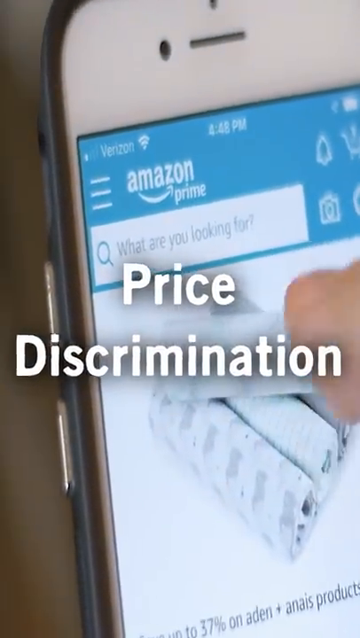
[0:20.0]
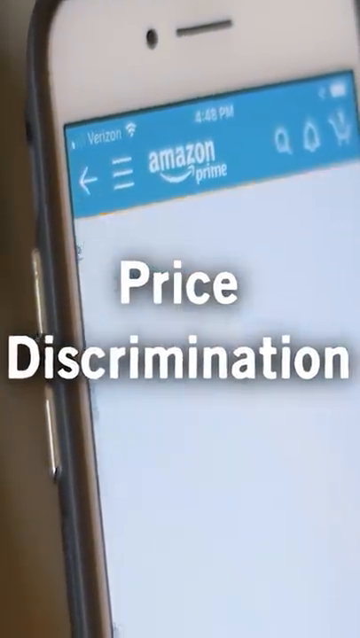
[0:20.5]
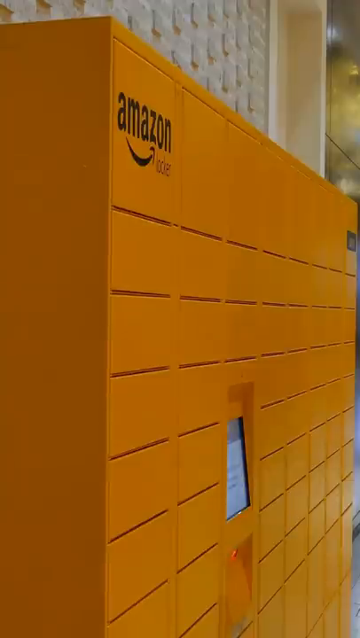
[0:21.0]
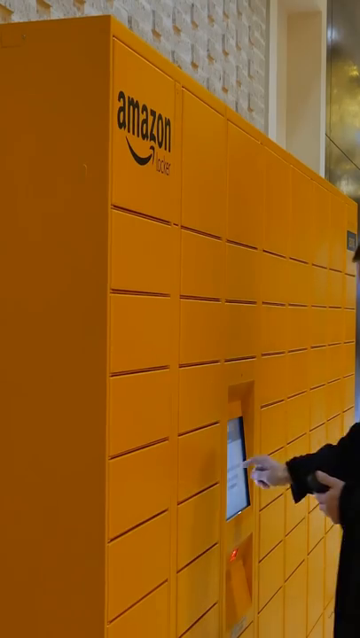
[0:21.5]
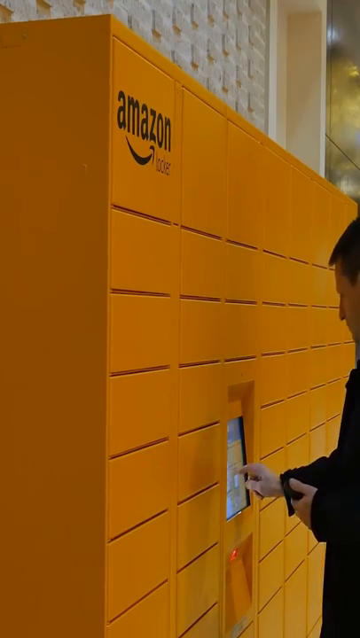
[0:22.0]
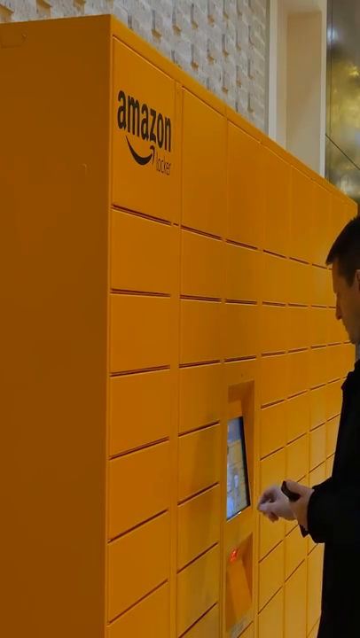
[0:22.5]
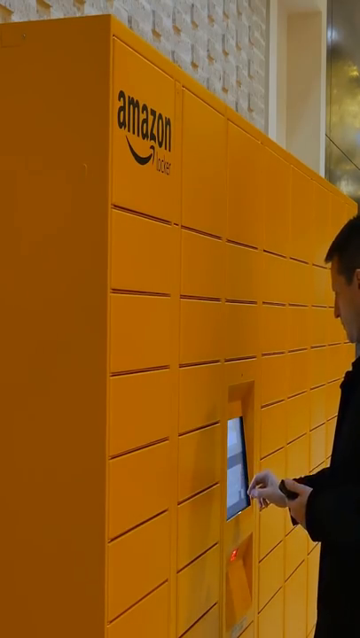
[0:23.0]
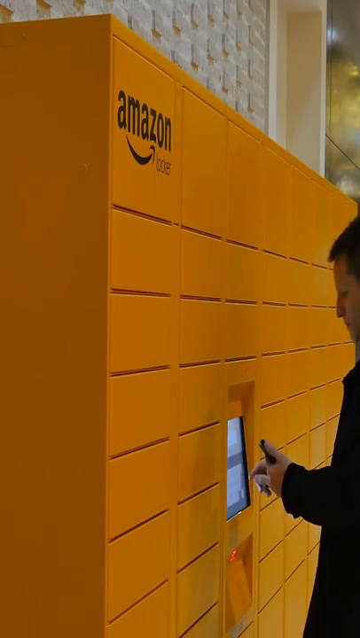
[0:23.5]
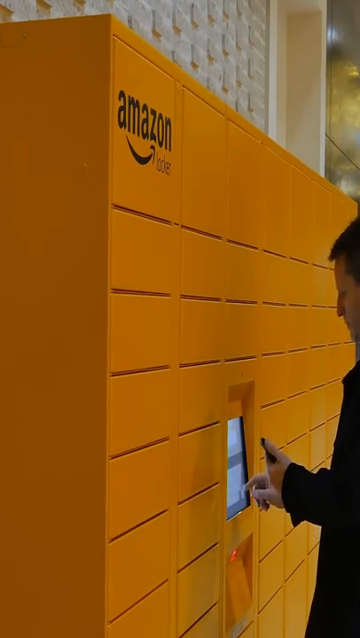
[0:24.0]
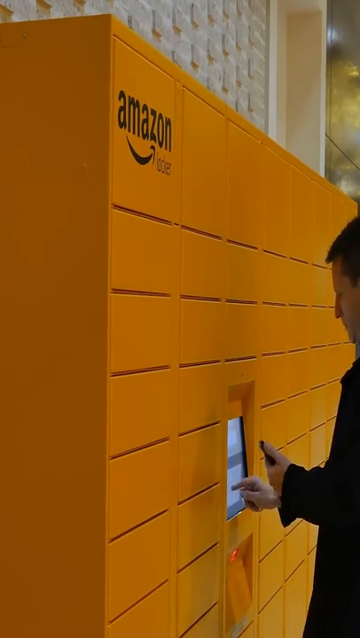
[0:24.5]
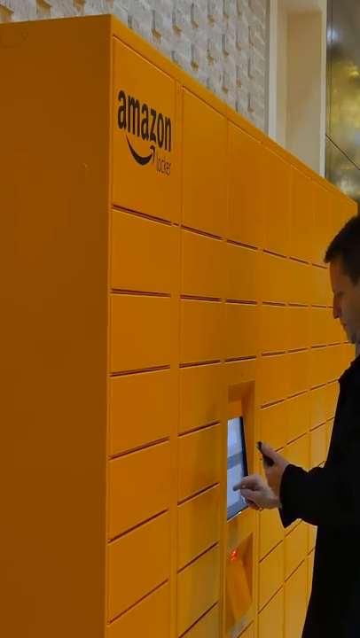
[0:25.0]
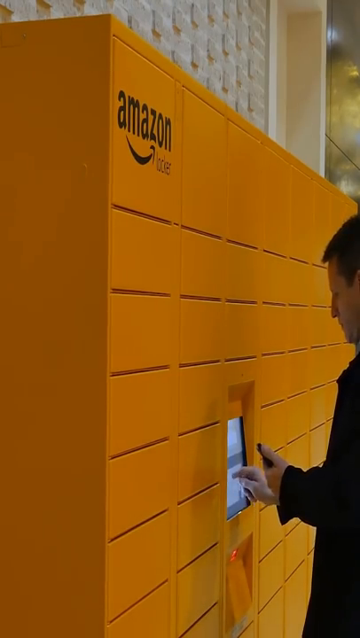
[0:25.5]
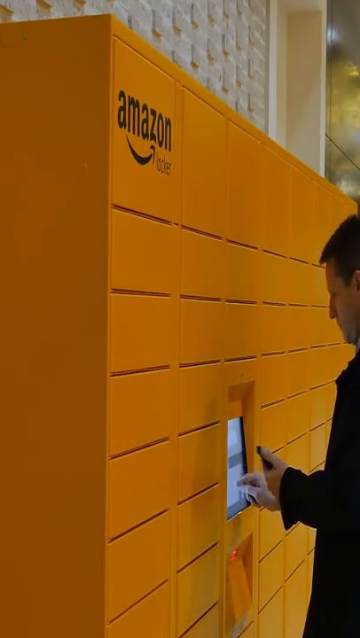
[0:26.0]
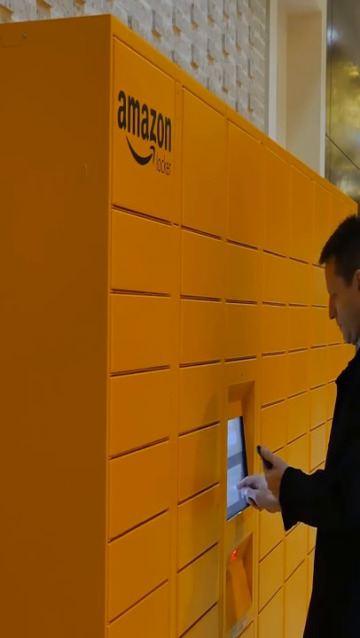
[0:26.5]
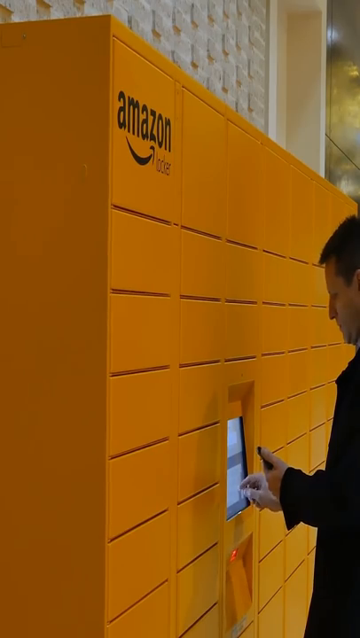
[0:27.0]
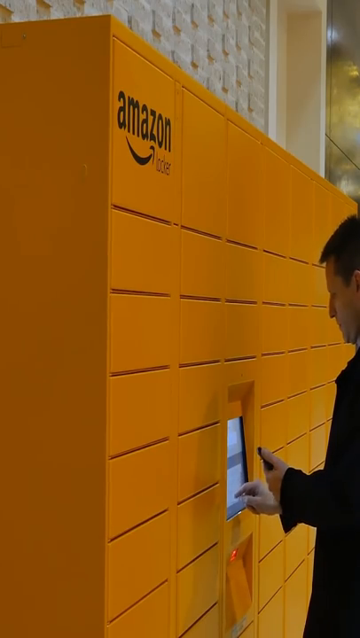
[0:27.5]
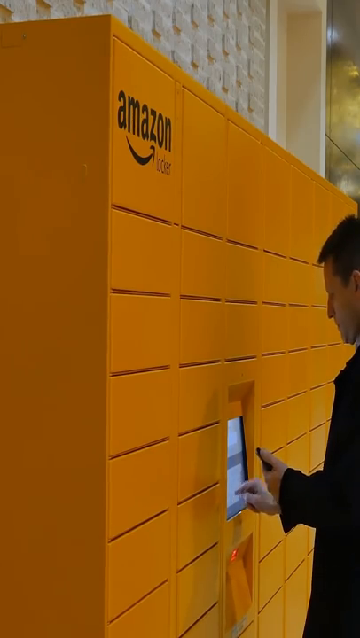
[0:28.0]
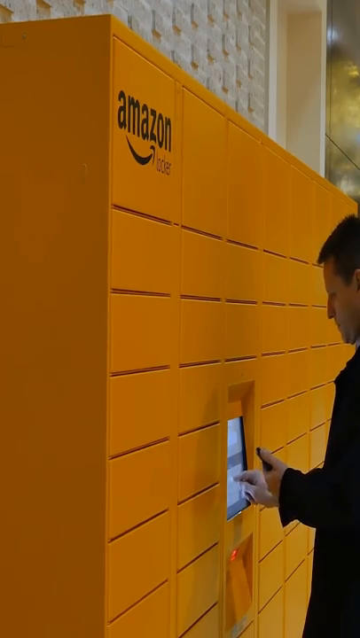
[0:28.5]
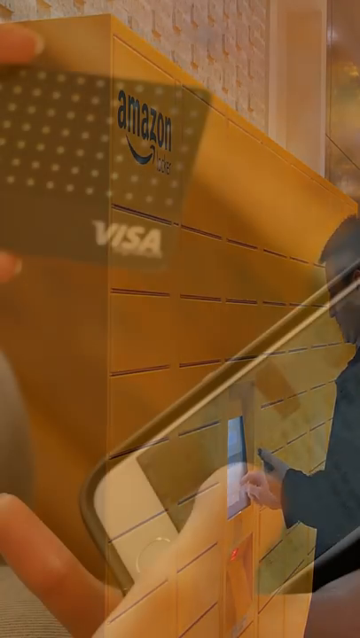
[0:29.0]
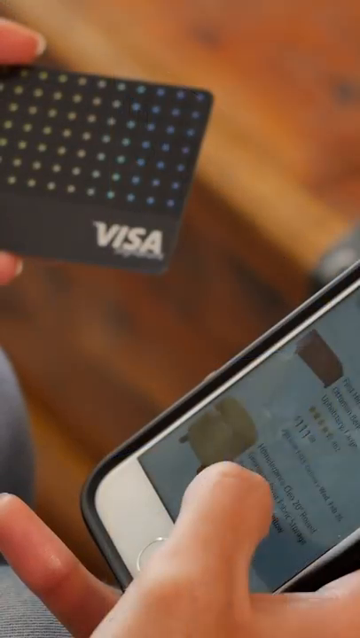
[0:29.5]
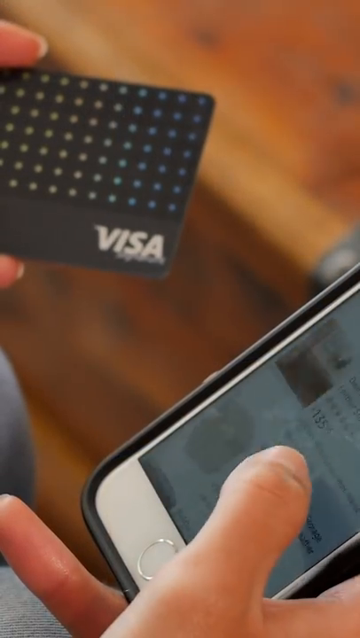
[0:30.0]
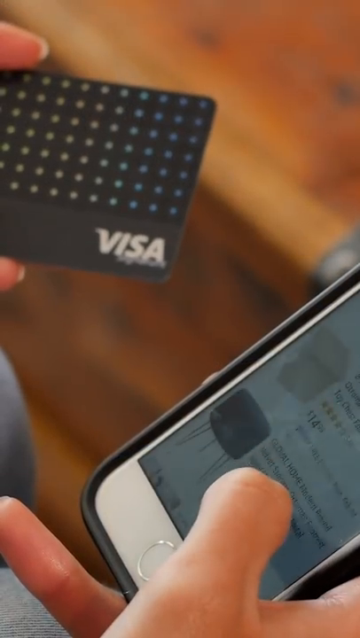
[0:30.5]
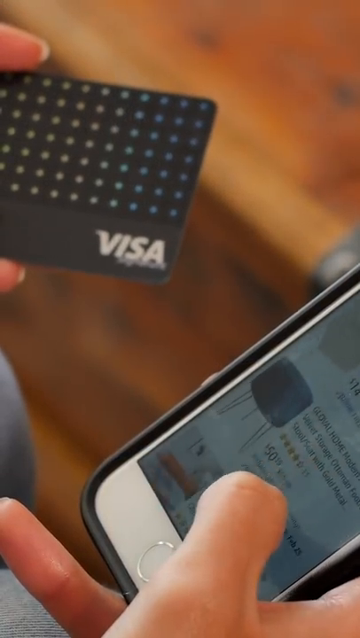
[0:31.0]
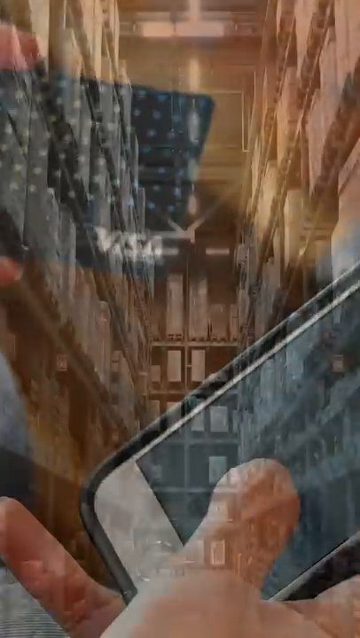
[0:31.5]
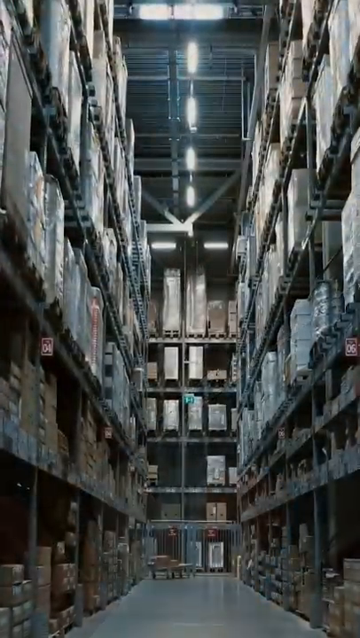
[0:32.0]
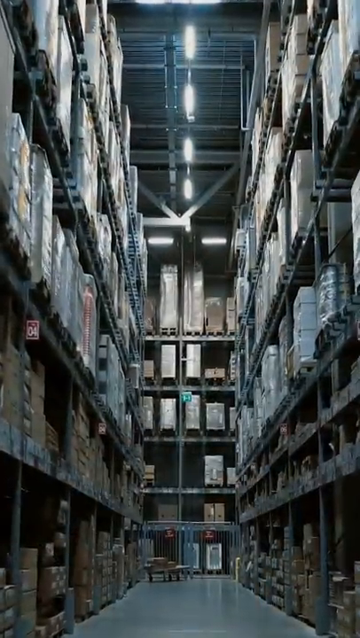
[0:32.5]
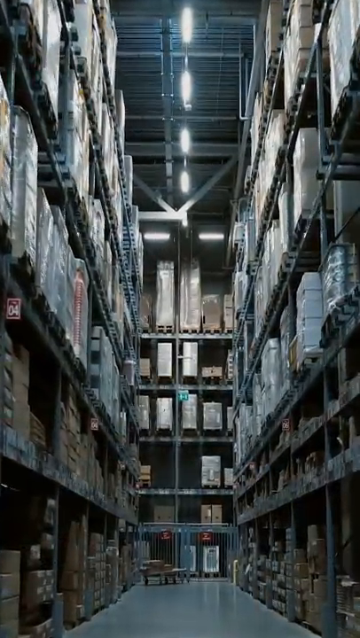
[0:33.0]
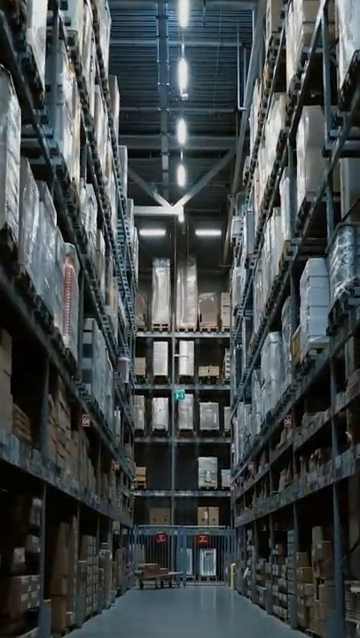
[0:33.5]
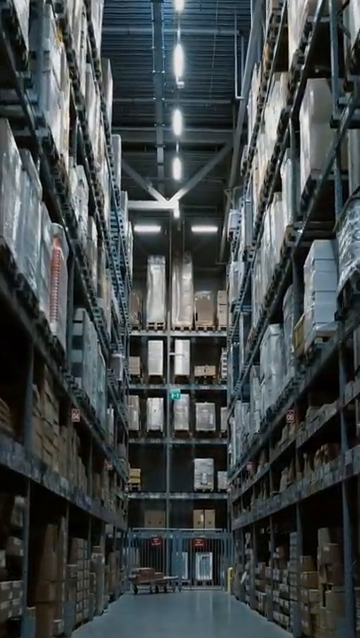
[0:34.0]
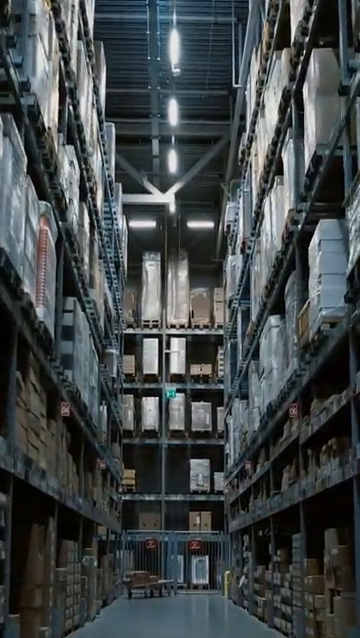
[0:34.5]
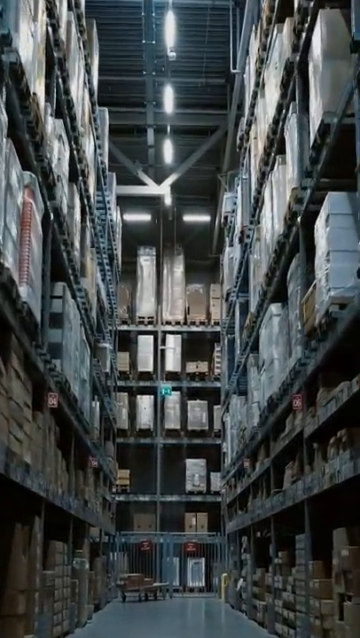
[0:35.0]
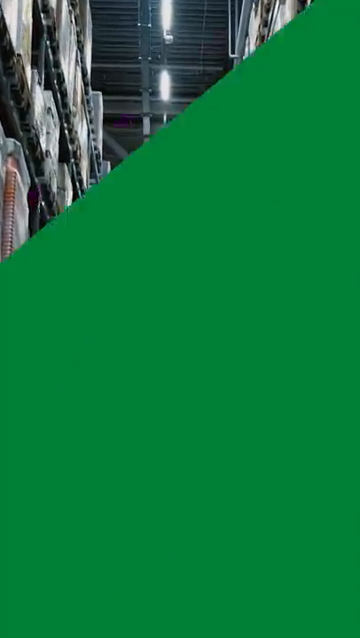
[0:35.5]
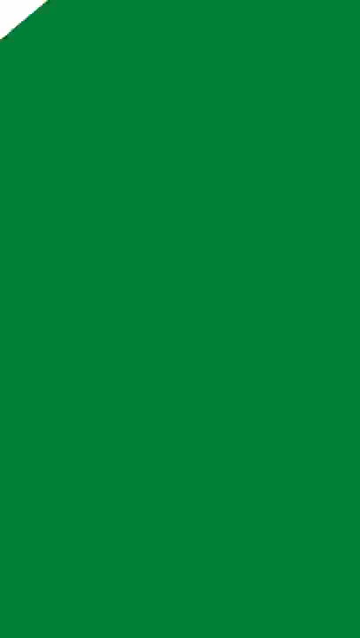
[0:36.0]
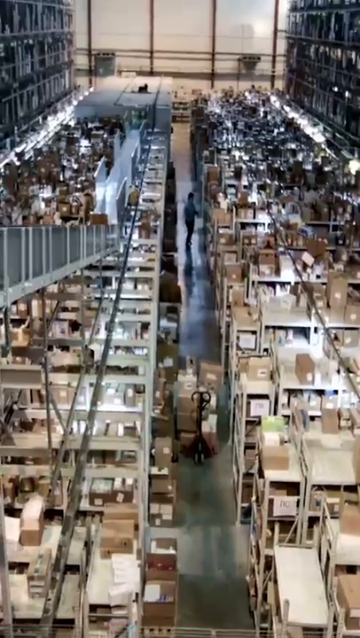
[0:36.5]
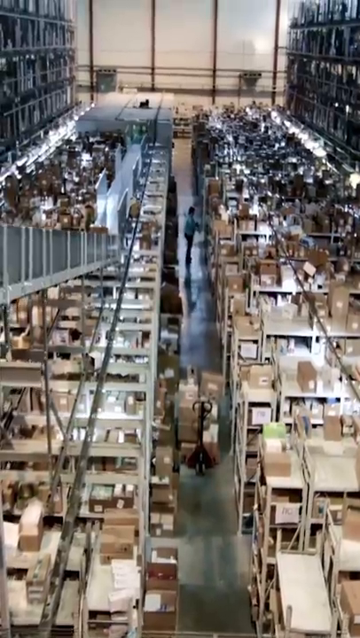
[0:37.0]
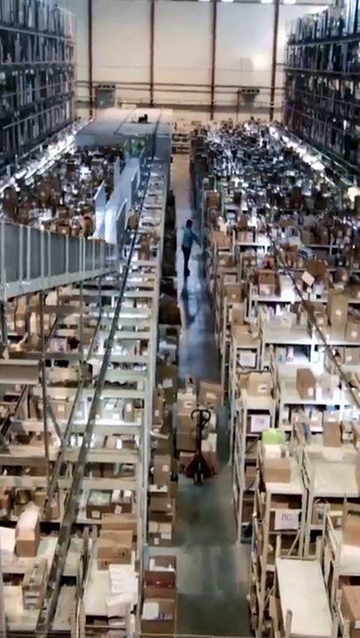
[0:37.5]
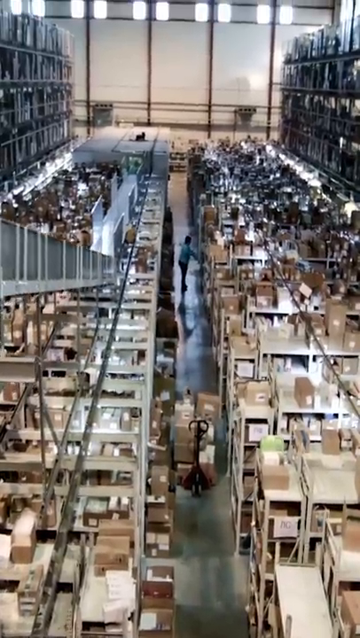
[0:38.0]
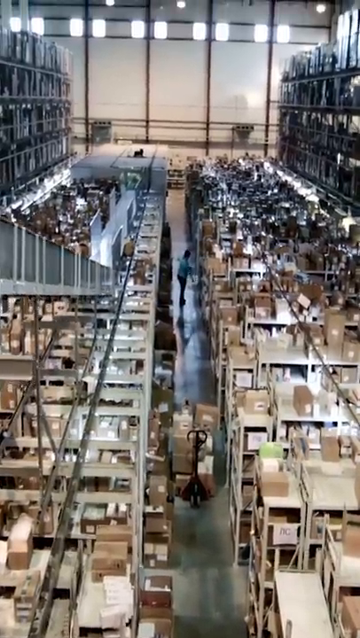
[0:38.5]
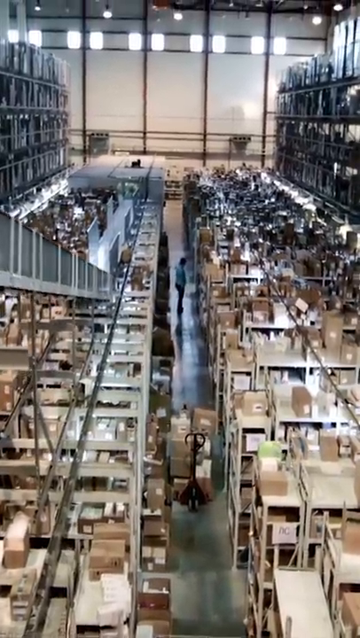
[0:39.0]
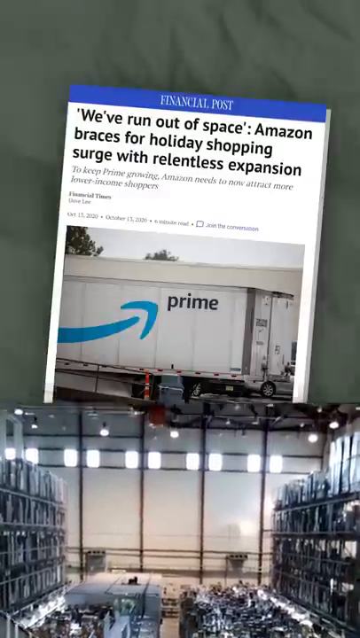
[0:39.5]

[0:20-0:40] Footage that seems to show browsing on an Amazon browser appears, along with shots of large storage areas, forklifts, and aerial views of the storage areas.